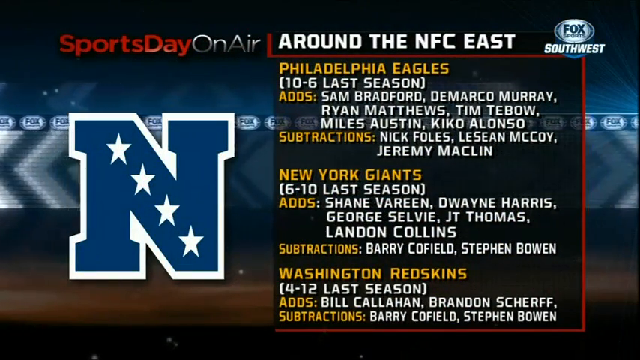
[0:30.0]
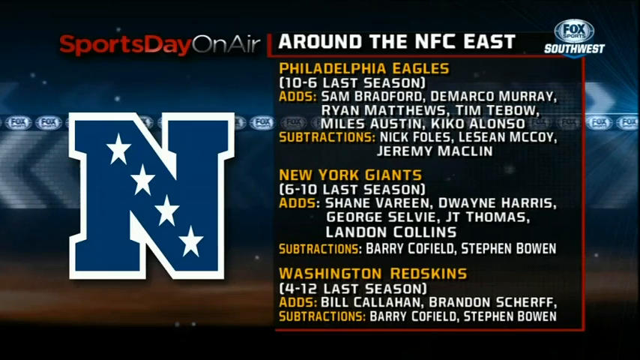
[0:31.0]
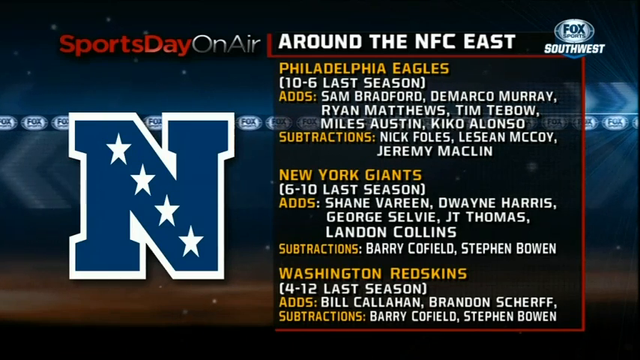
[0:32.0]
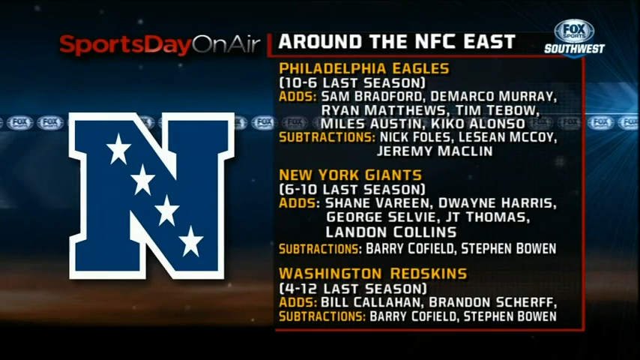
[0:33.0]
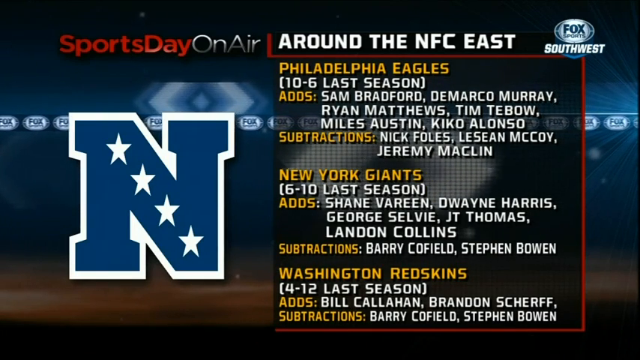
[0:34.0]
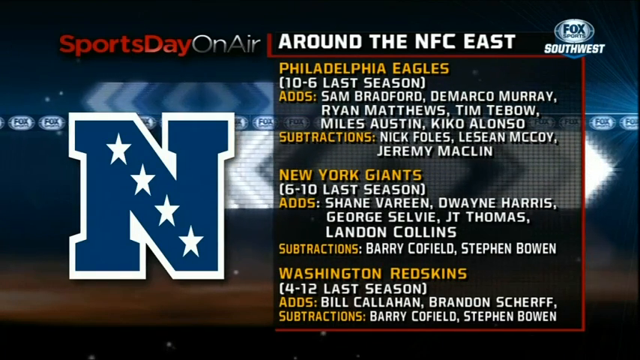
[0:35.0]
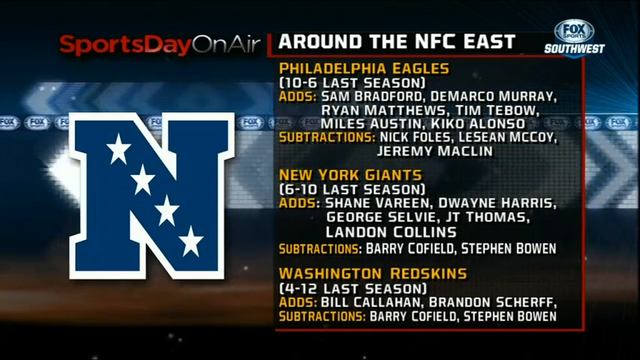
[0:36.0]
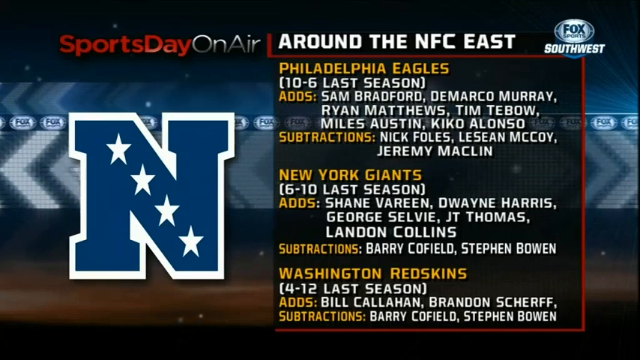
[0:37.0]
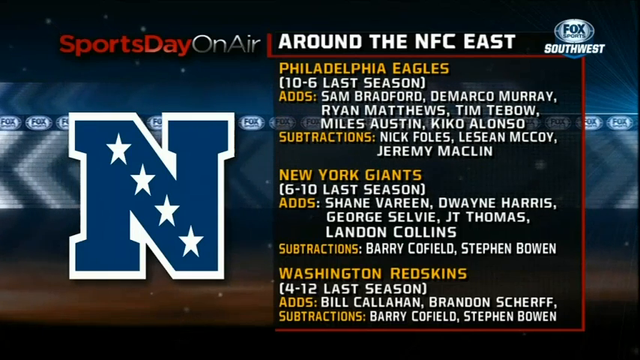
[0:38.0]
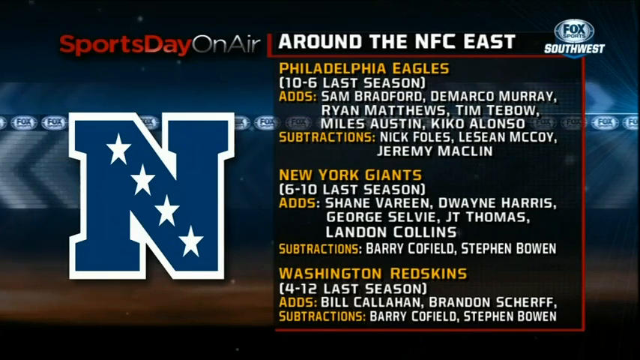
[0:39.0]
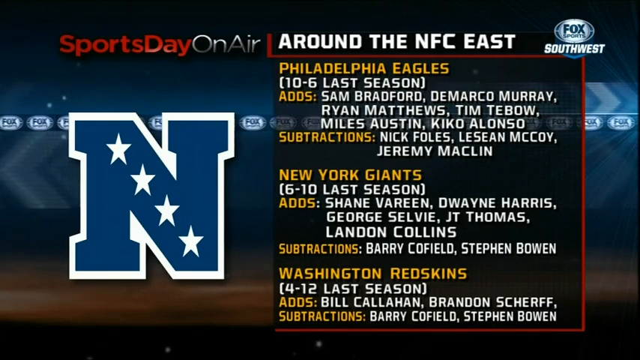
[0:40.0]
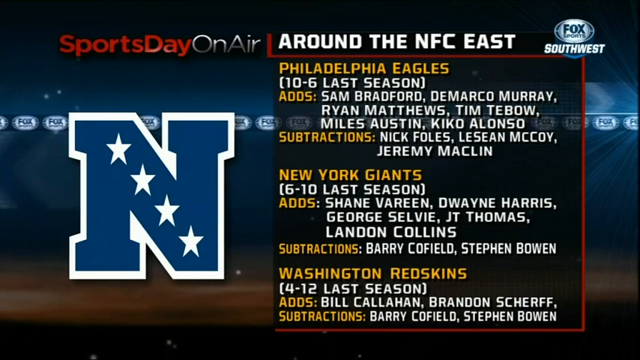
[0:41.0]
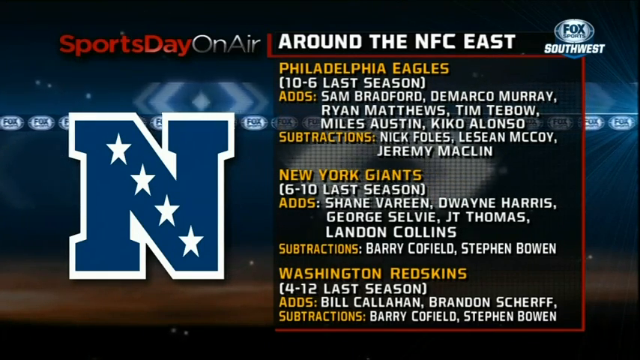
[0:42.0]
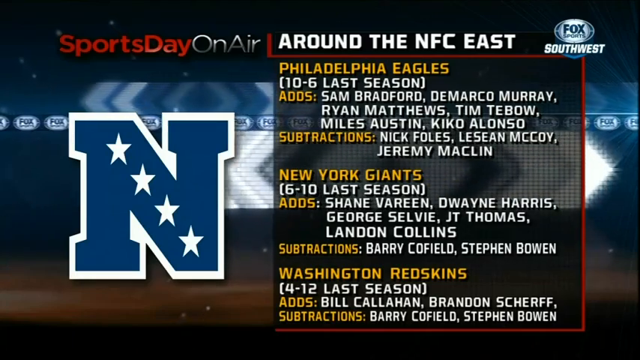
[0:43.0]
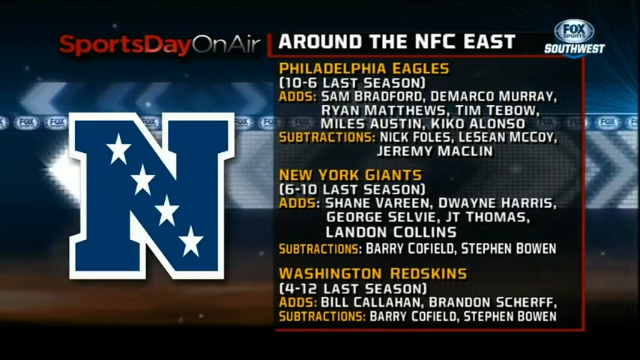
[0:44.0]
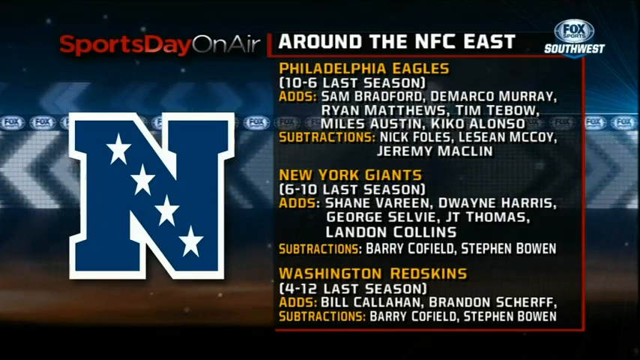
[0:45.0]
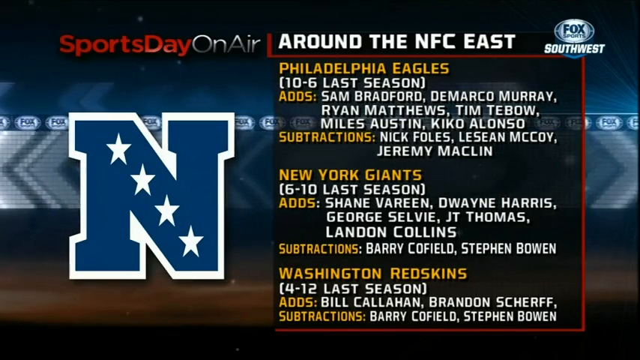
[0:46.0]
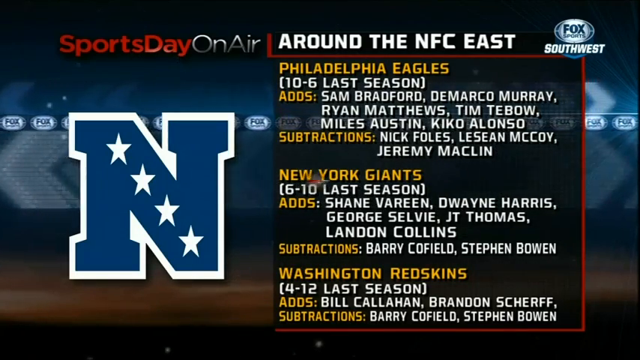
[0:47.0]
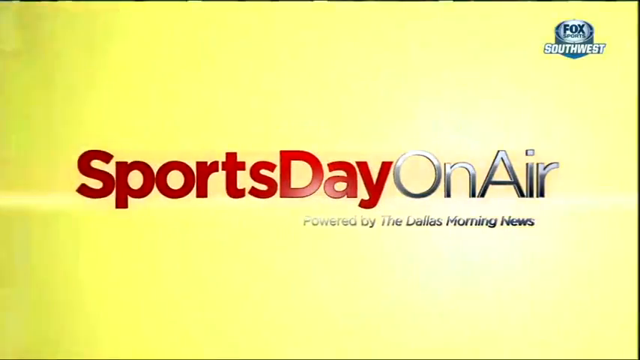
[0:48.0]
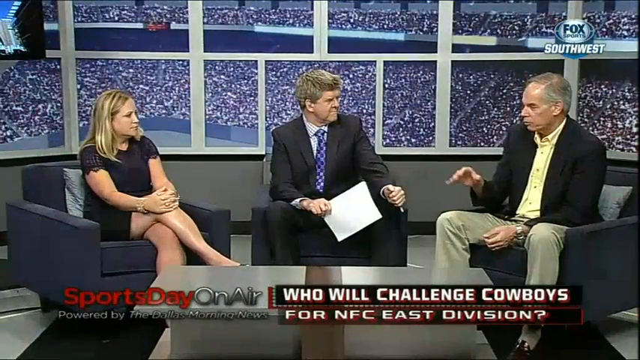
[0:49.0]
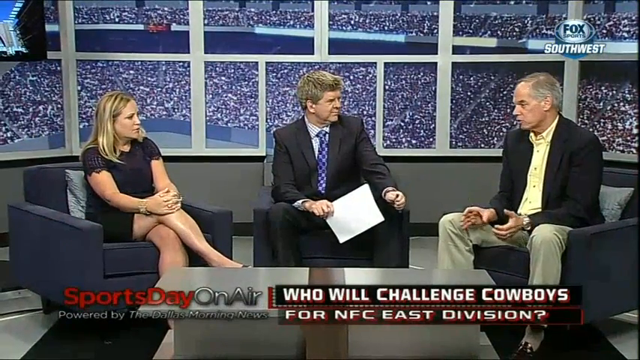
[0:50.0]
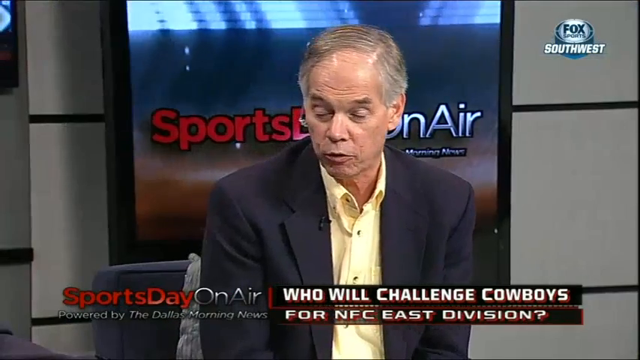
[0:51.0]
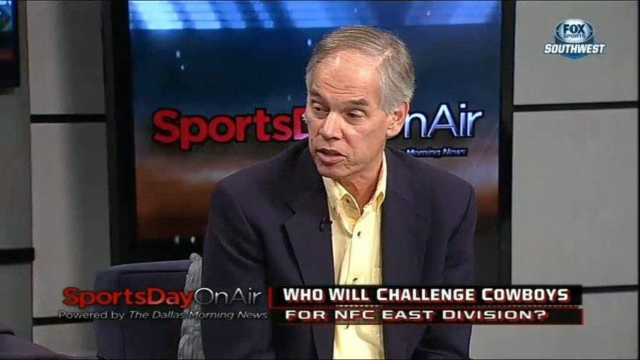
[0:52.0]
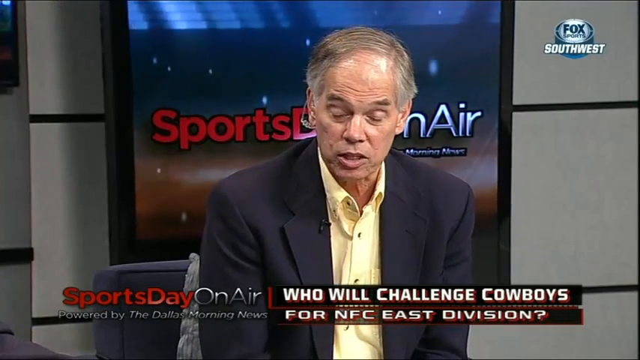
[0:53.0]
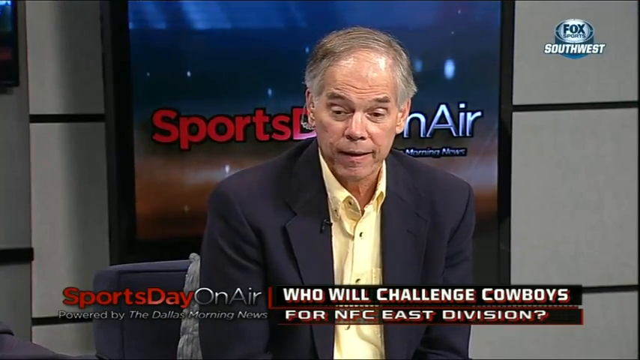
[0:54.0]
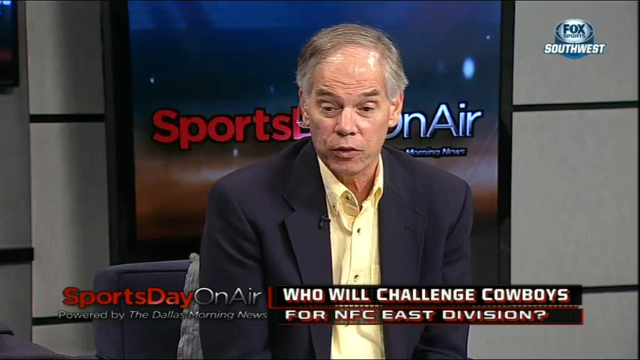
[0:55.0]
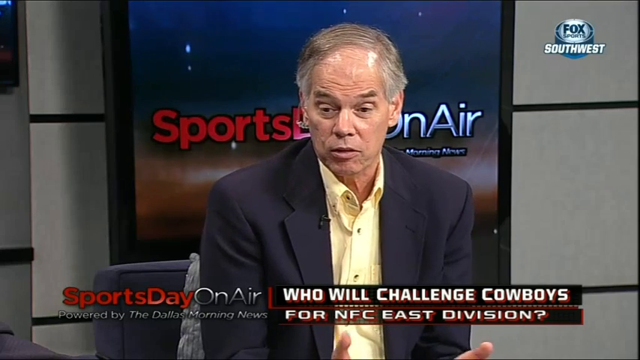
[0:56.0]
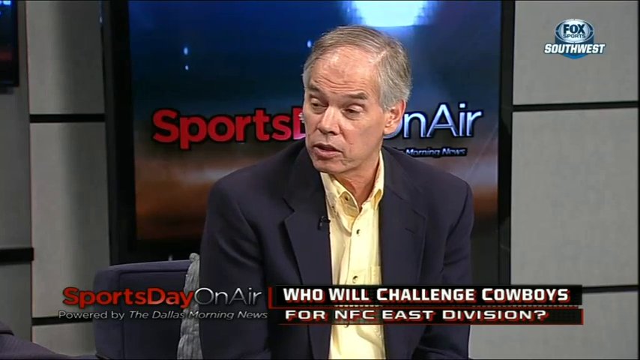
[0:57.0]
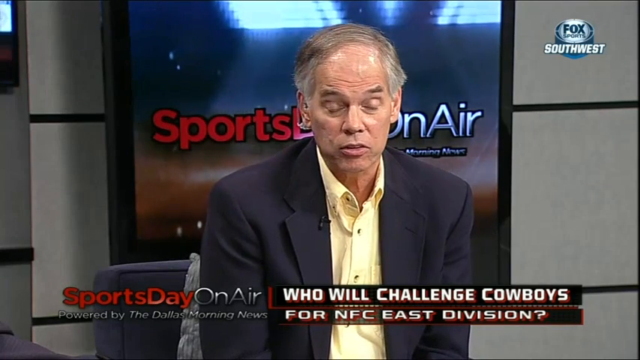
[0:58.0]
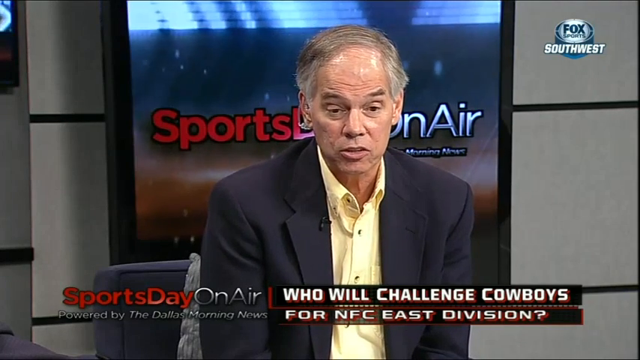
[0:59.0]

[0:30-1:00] The infographic of stats for the Philadelphia Eagles, New York Giants and Washington Redskins appears, showing the additions and subtractions each team made to its players. In the top right is a logo that reads "Fox Sports Southwest." When the view transitions back from the infographic, the Sports Day On Air logo is shown up close, as if zoomed in, and then it zooms out to the three people in the studio. The camera pans to the man on the right in the yellow dress shirt and zooms in on him; in the background is an even larger monitor with the Sports Day On Air logo playing in a loop. The man is talking, his right arm raised slightly to gesture, and he sort of moves his hand down below his waist and moves it around as he talks. He has grey hair, a receding hairline and many wrinkles on his face.